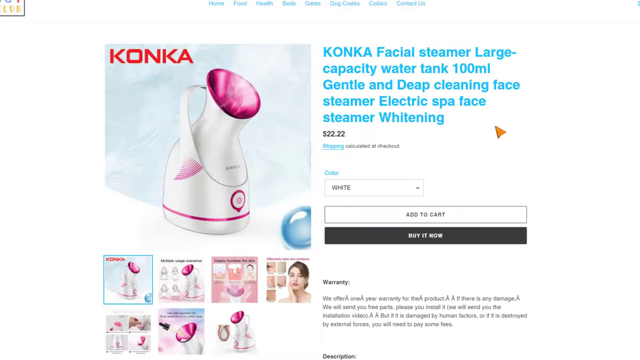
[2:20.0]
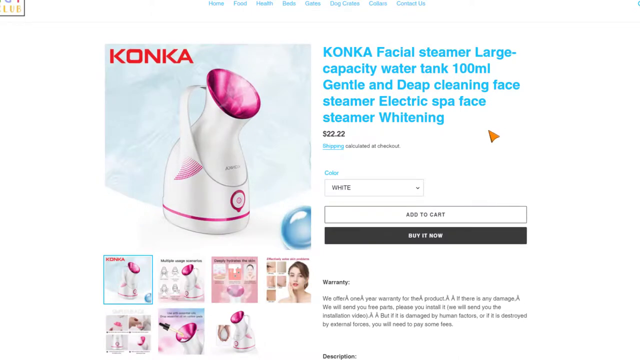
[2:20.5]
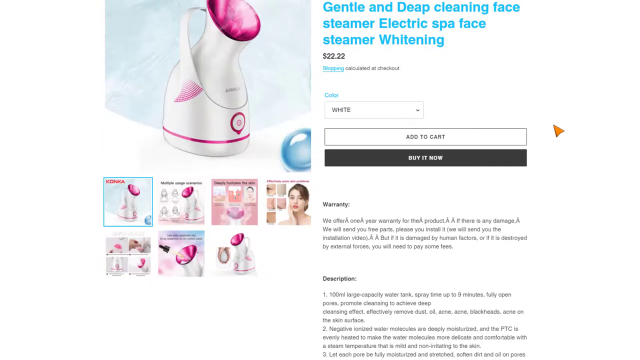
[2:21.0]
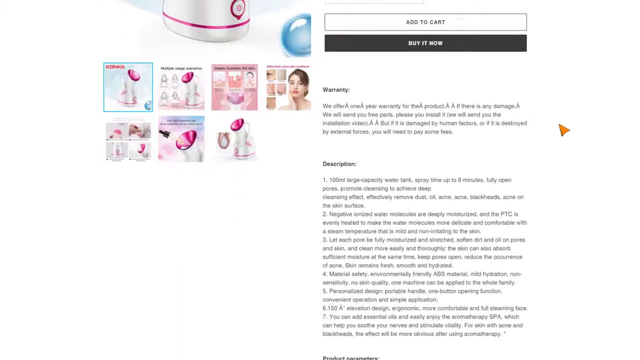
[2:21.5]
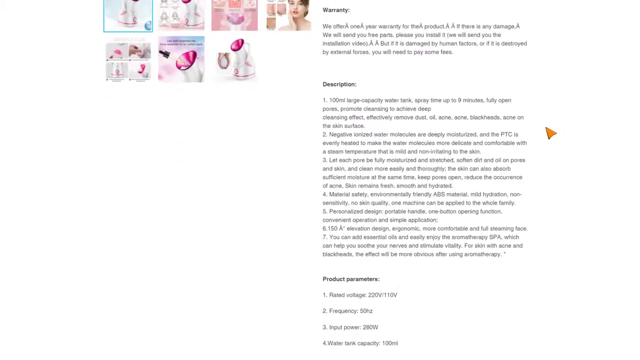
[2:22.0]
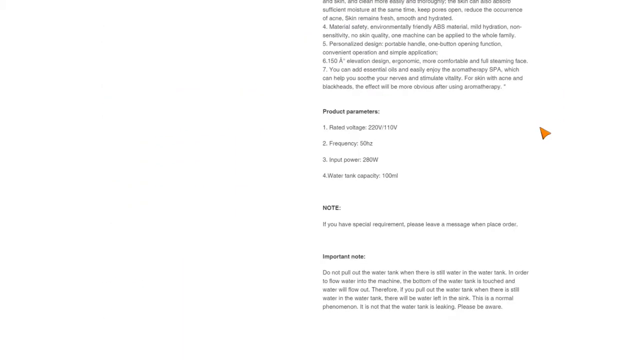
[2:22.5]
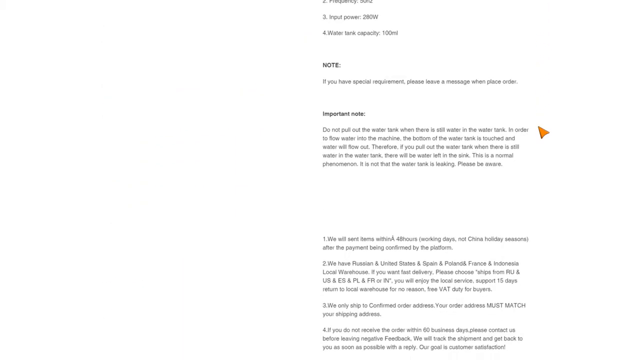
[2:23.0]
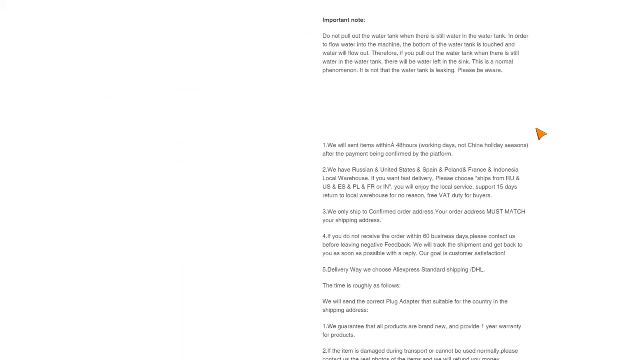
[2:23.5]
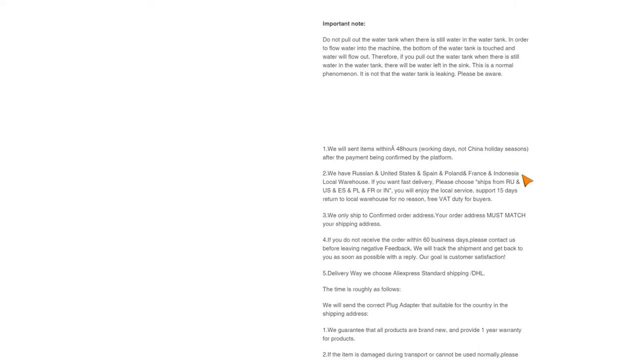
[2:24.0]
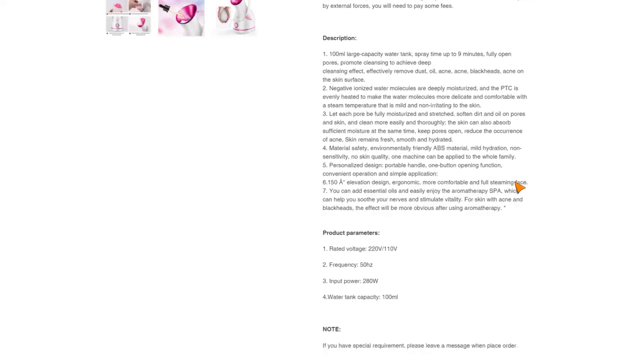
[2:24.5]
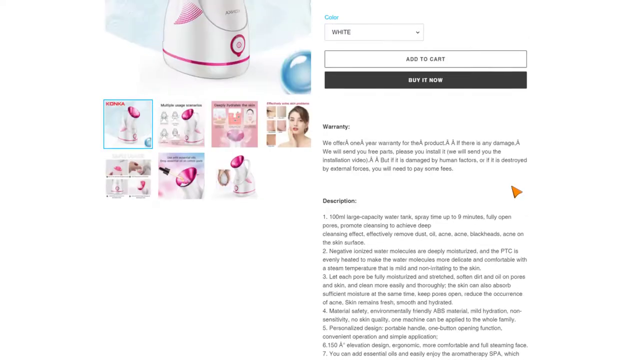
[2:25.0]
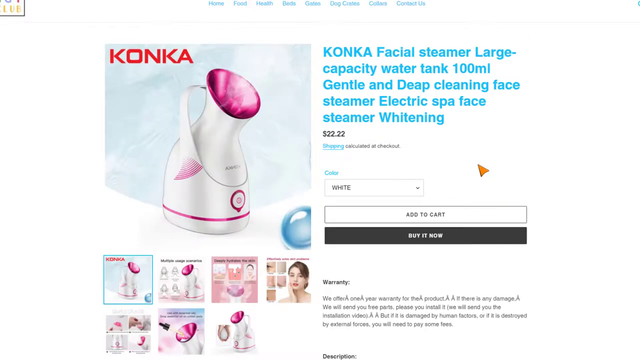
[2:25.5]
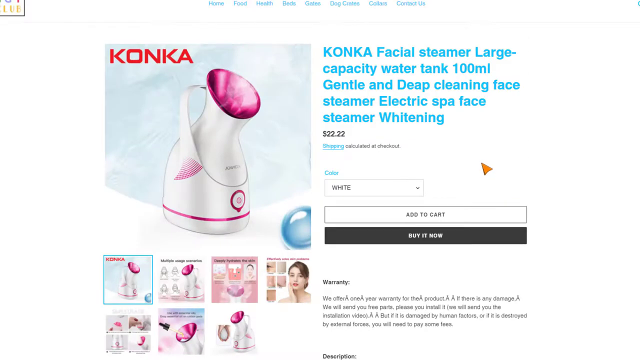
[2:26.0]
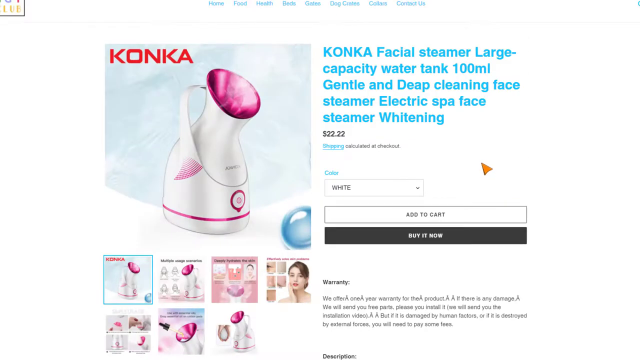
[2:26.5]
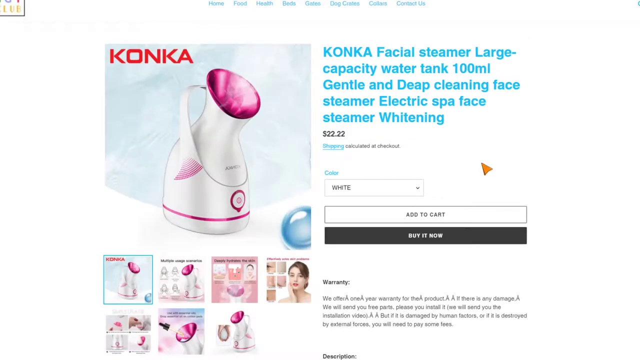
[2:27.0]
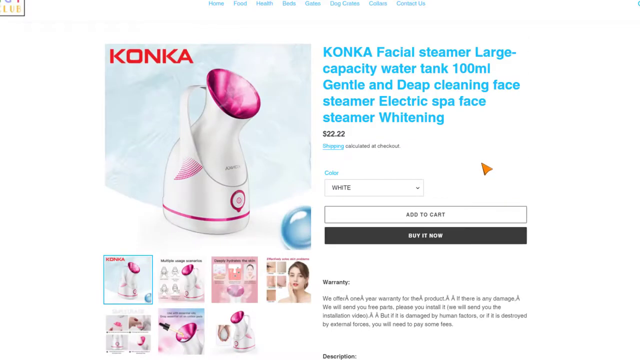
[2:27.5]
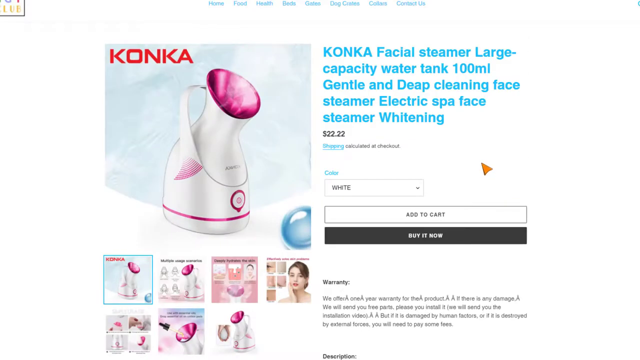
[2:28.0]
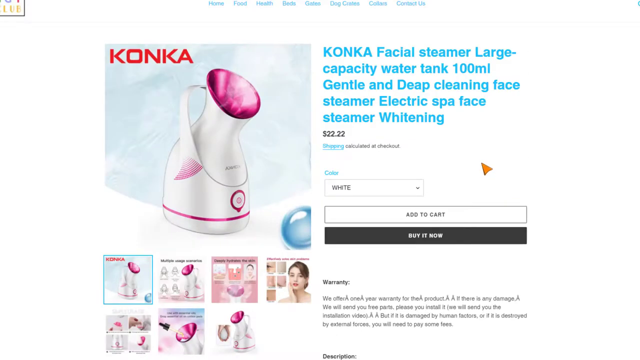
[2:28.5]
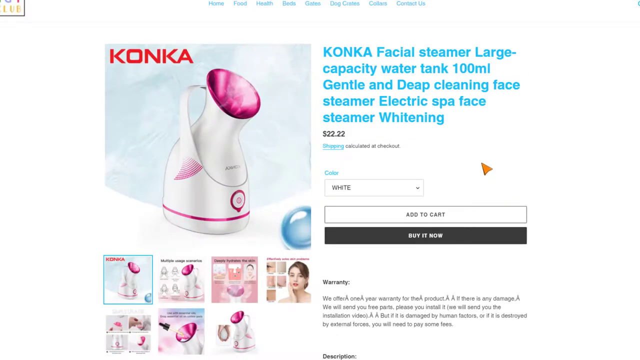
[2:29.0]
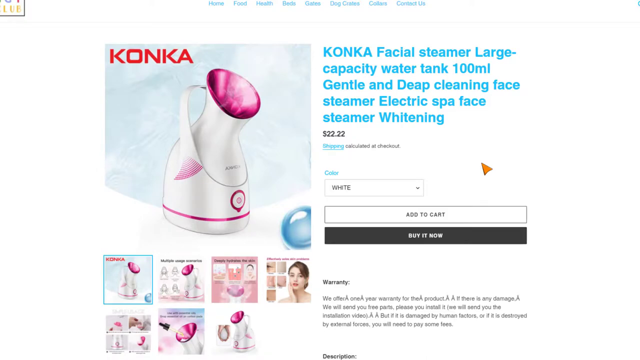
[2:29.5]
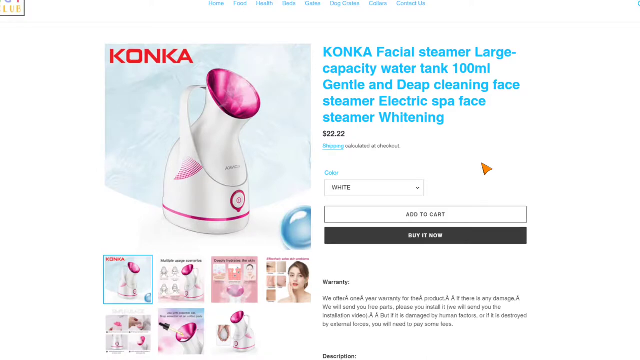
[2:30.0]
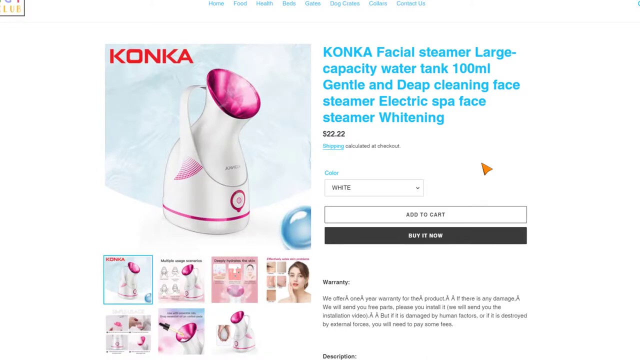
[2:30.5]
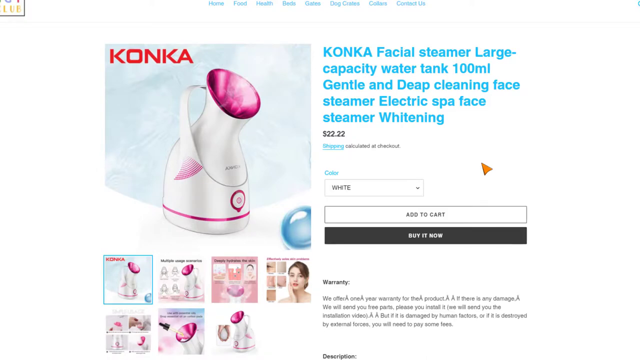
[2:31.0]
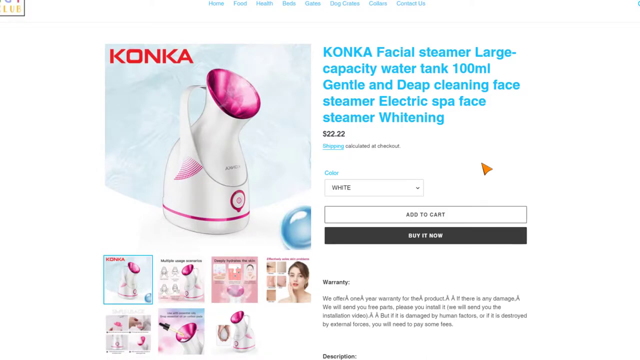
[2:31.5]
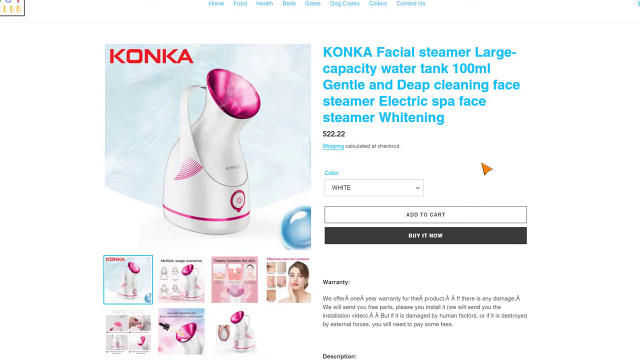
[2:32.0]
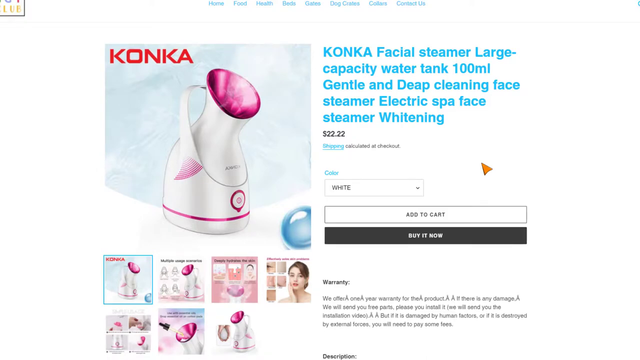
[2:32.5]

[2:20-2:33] The product image is pink and white, mostly white. Text reads "KONKA facial steamer large capacity water tank 400 ml gentle and deep cleaner face steamer electric spa face steaming whitening." Several images of the product appear as the person scrolls down with an orange mouse cursor, then quickly scrolls back up.